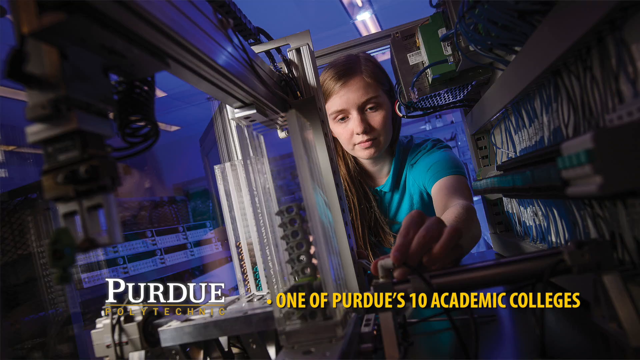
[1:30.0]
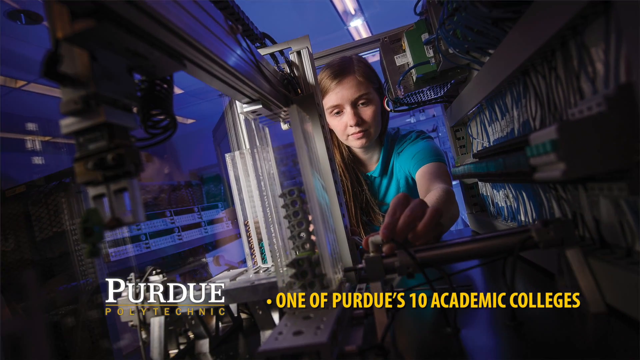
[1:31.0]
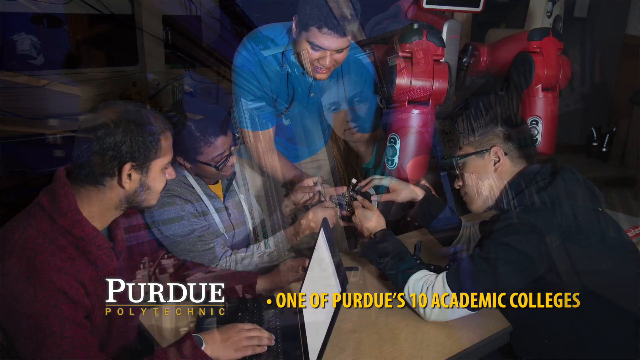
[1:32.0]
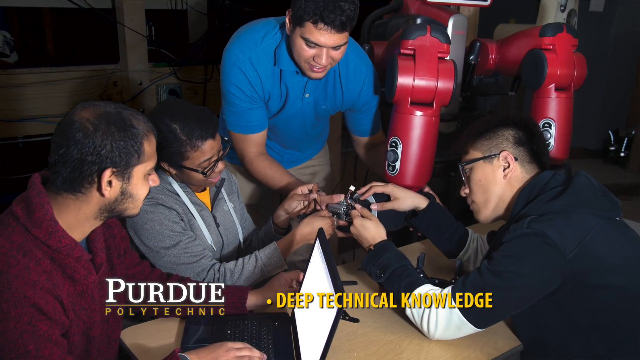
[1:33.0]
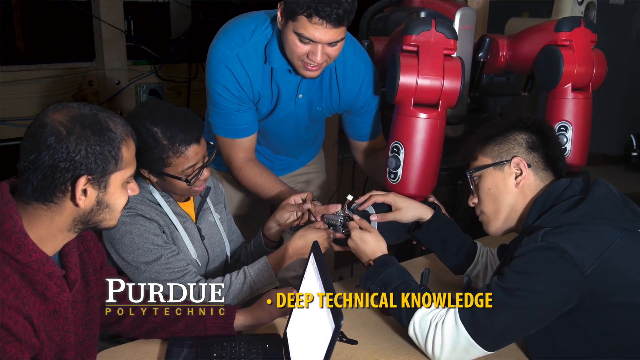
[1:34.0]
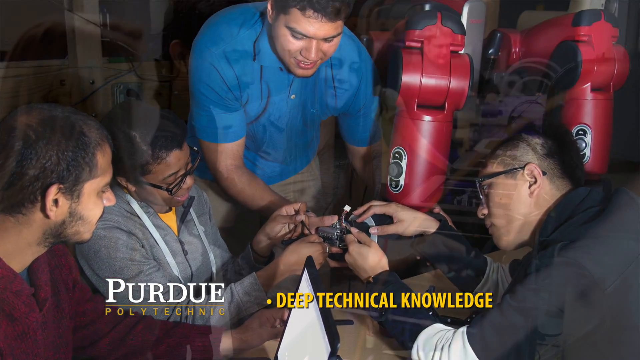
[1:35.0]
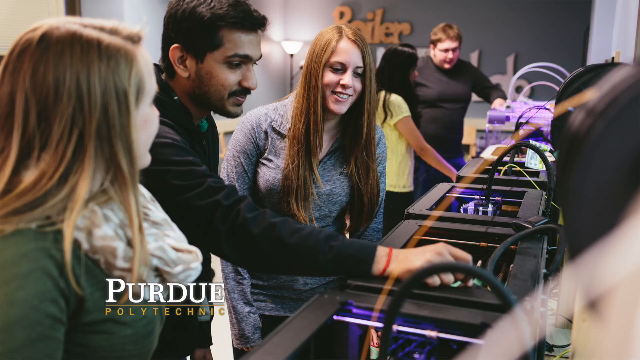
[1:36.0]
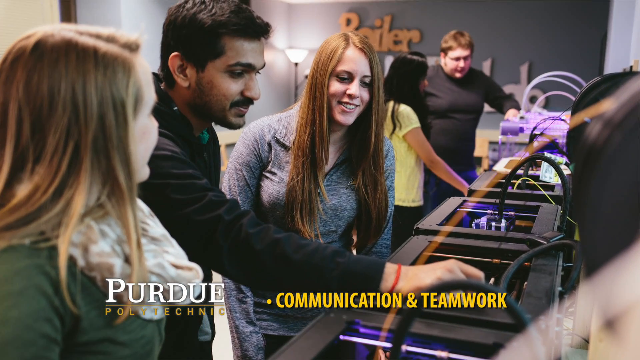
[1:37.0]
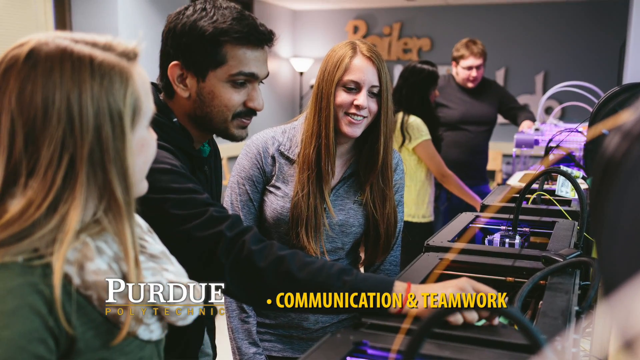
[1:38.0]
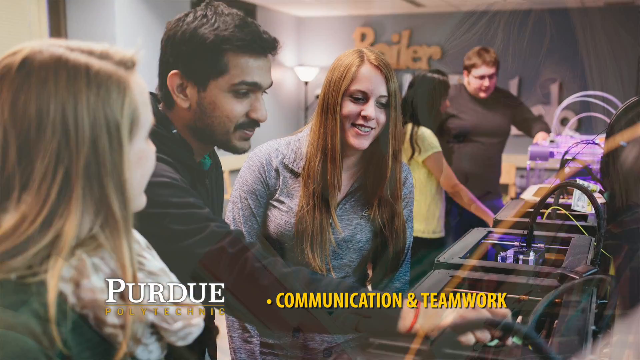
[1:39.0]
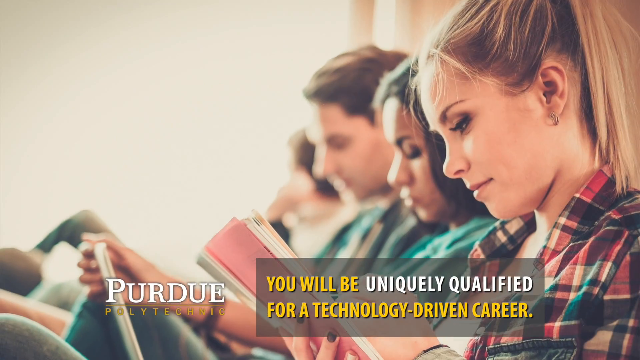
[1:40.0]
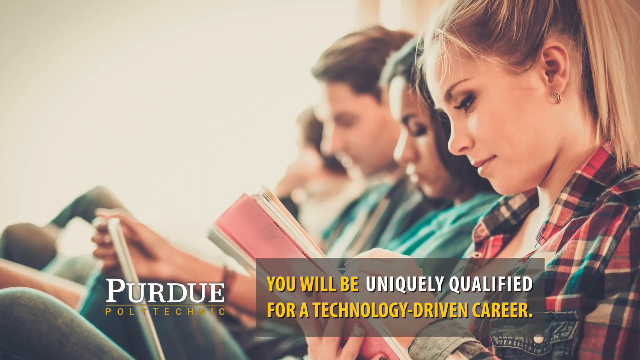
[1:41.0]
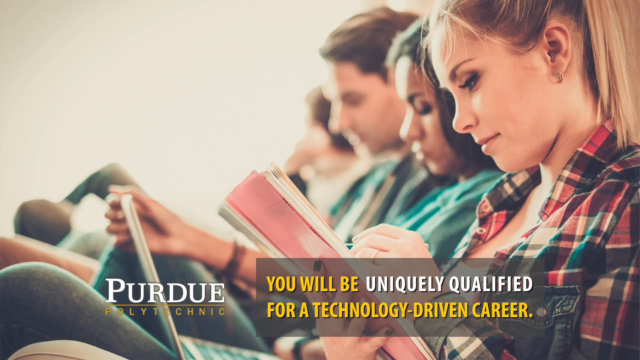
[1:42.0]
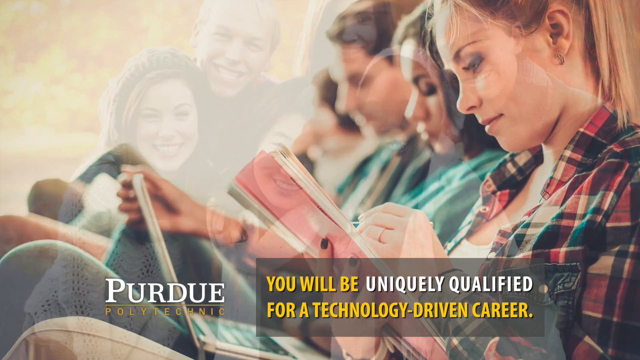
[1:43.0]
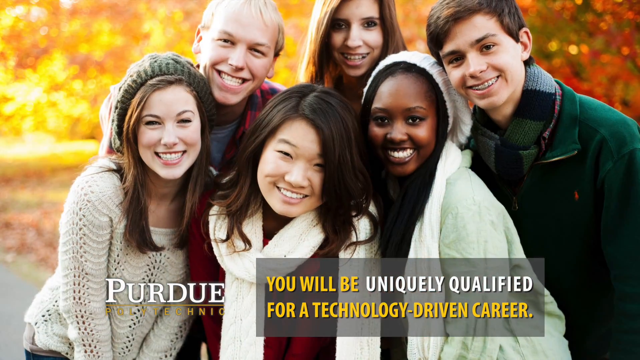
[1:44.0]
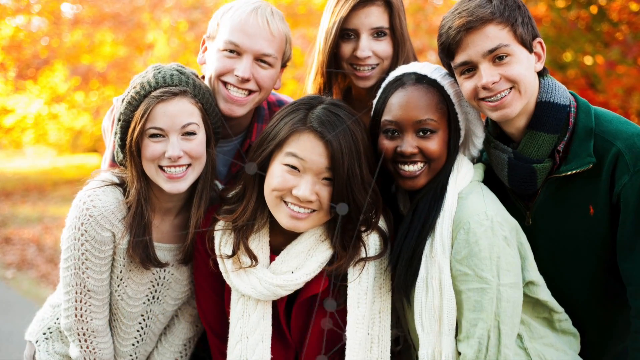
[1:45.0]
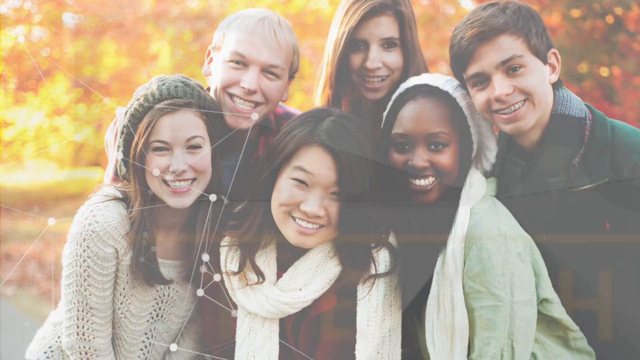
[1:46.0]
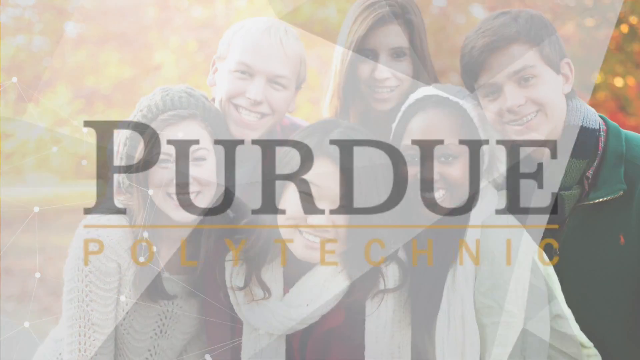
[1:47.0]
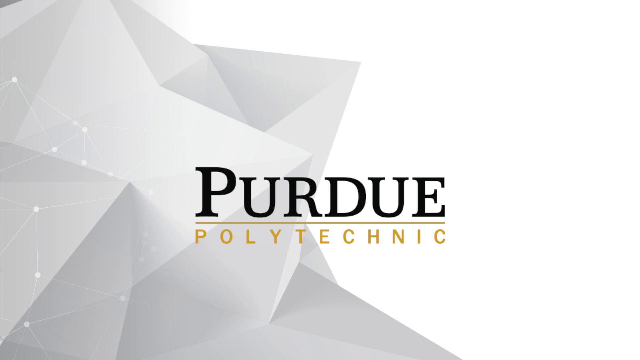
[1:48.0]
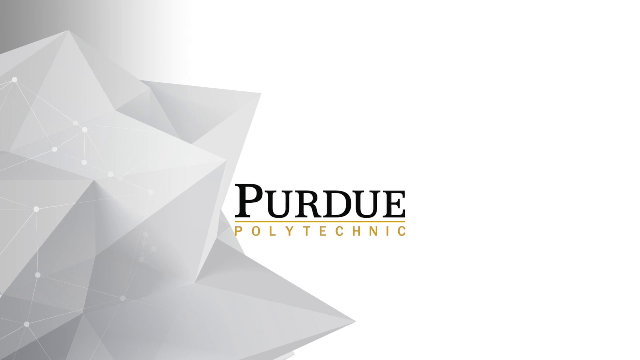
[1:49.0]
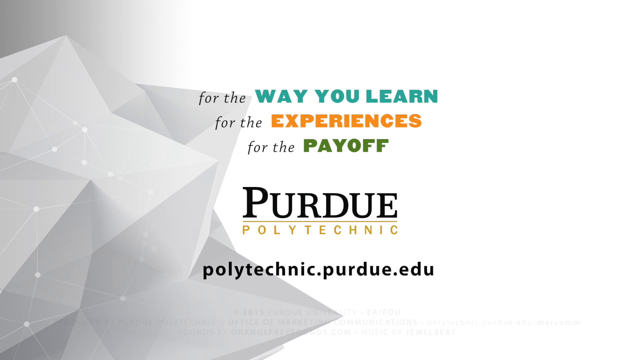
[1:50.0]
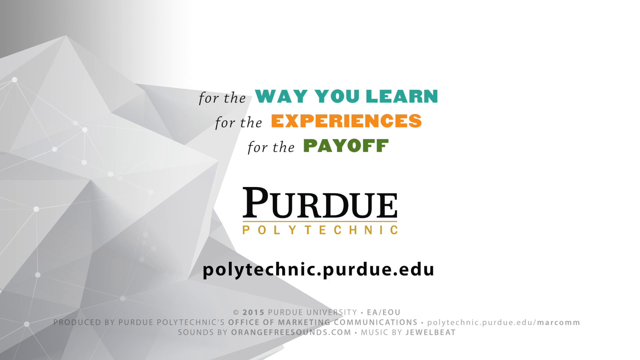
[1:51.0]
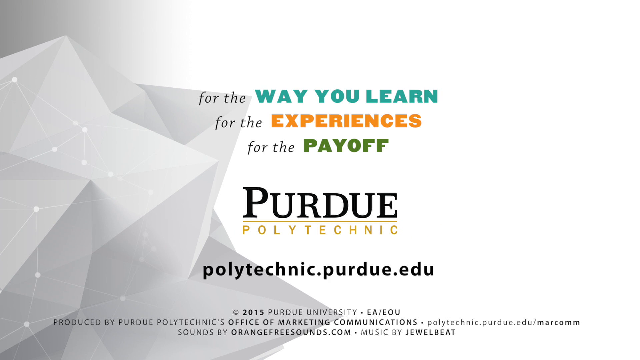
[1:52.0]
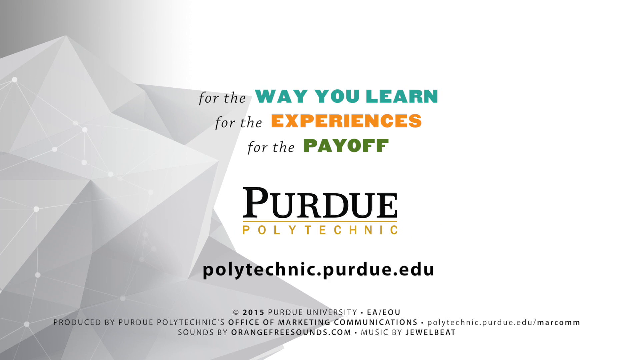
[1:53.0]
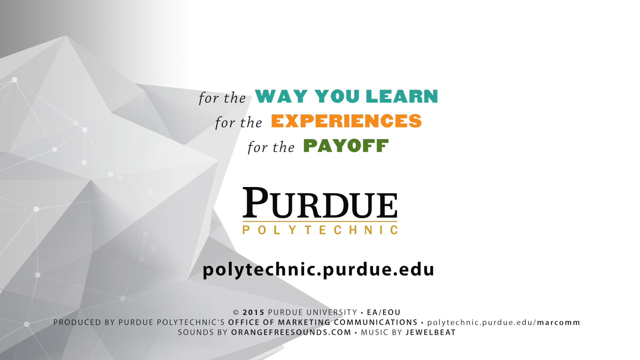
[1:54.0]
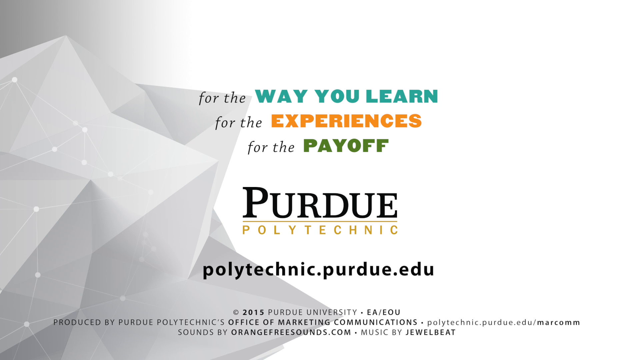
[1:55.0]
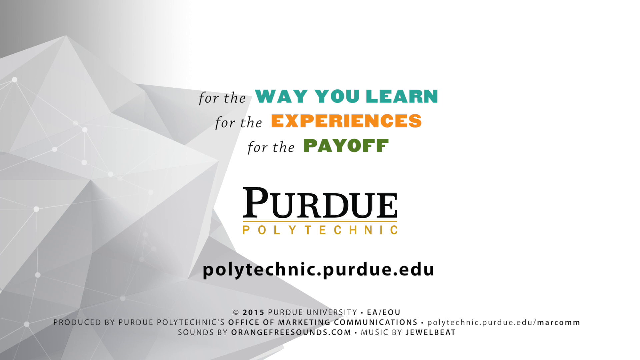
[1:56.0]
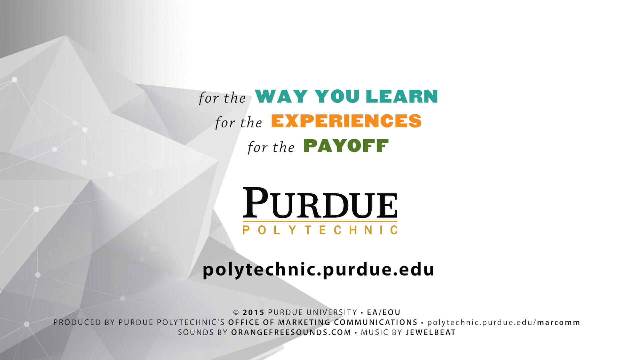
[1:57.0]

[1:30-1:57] The woman with the PLC machine appears. The next slide shows four men adjusting settings on a robot arm. Information states that Purdue Polytechnic graduates have deep technical knowledge and communication and teamwork skills. A photo shows a man from India with two women from the USA working together, apparently at a 3D printer. The next slide says that Purdue Polytechnic graduates will be uniquely qualified for a technology-driven career. The Purdue Polytechnic logo appears with the words "for the way you learn, for the experiences, for the payoff," along with the website polytechnic.purdue.edu. The video is from 2015, from Purdue University, produced by Purdue Polytechnic's Office of Marketing Communications.